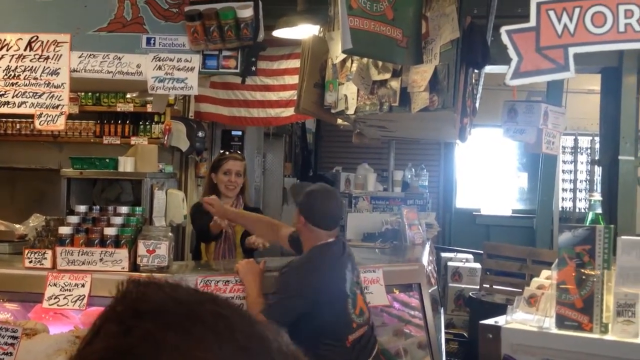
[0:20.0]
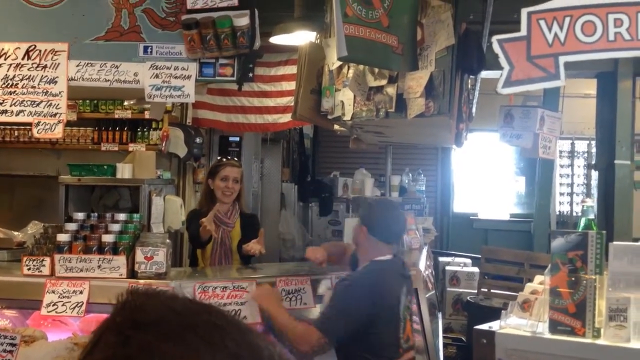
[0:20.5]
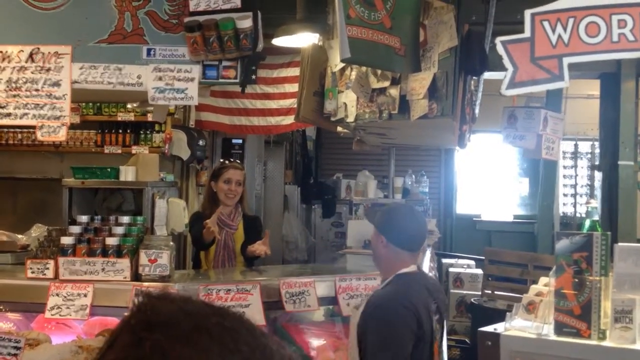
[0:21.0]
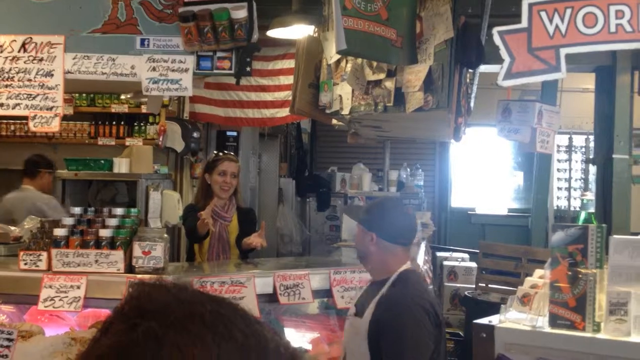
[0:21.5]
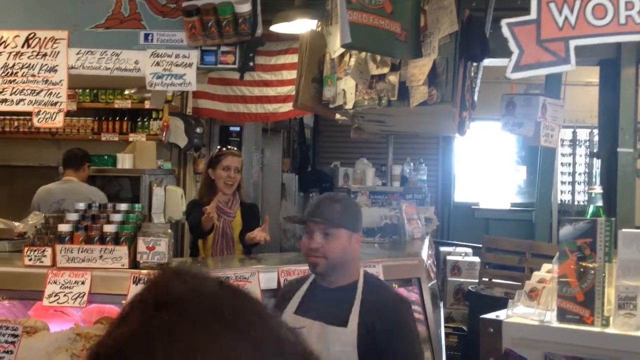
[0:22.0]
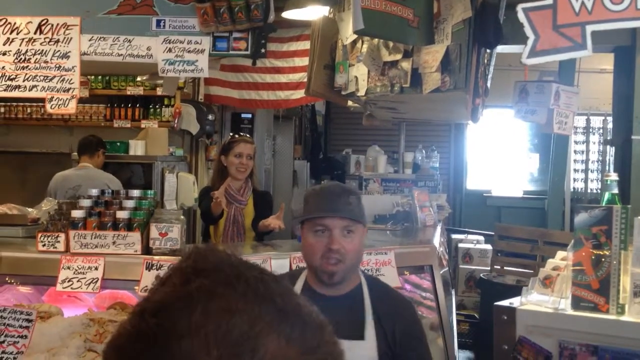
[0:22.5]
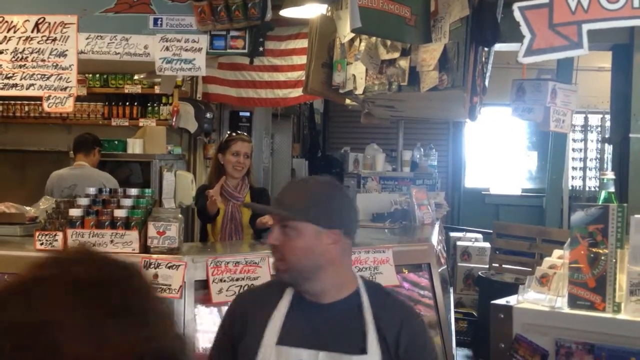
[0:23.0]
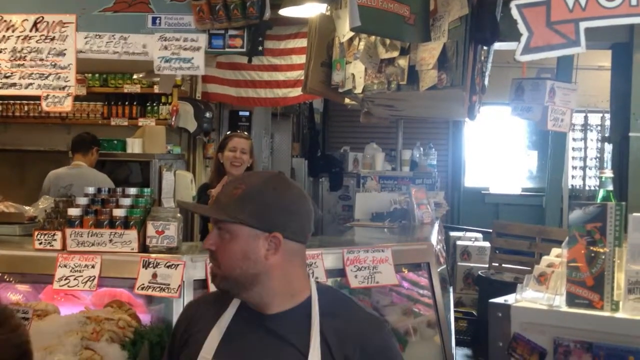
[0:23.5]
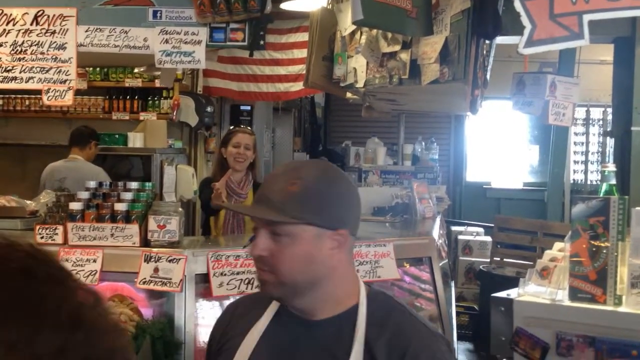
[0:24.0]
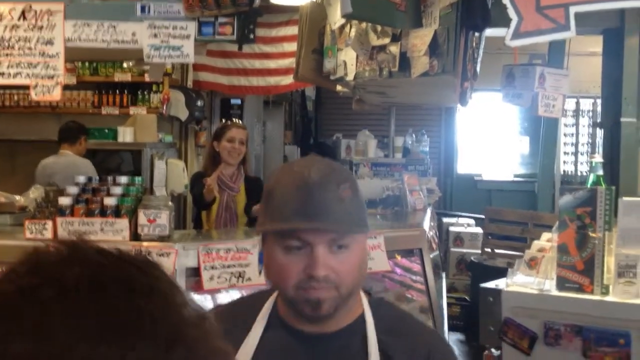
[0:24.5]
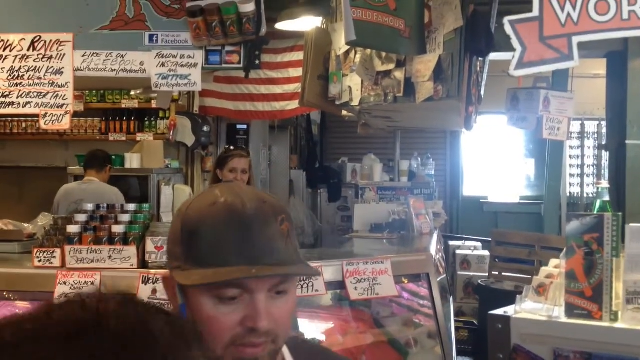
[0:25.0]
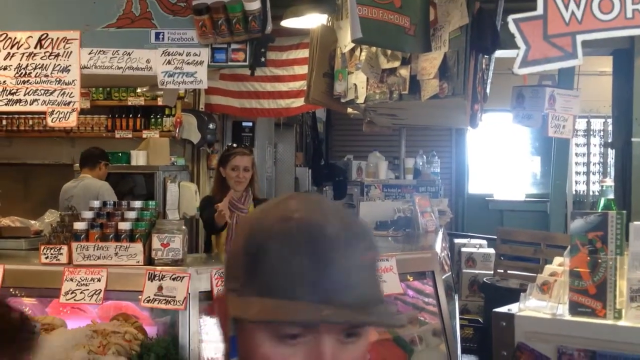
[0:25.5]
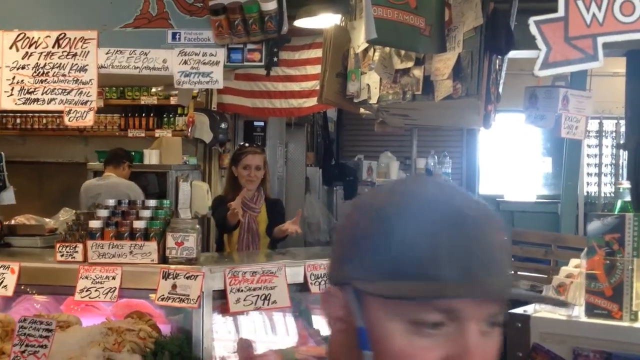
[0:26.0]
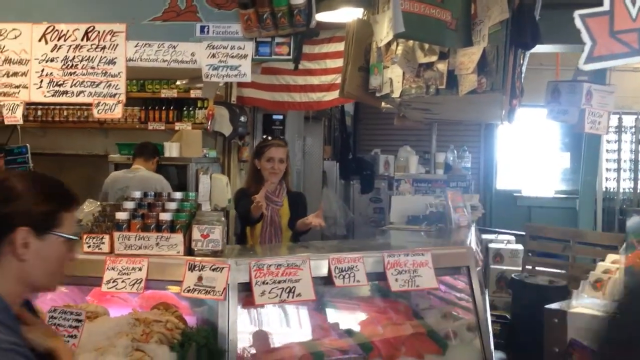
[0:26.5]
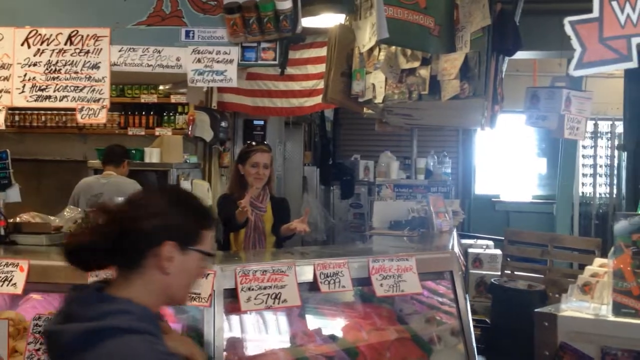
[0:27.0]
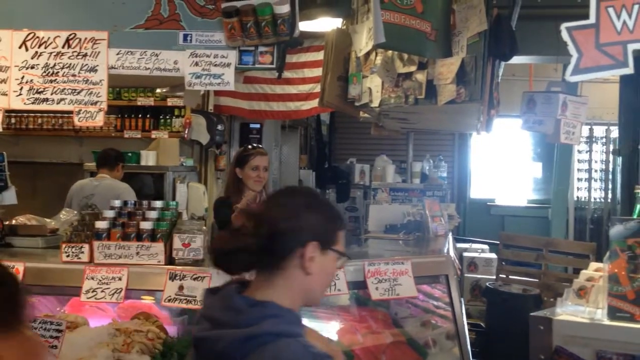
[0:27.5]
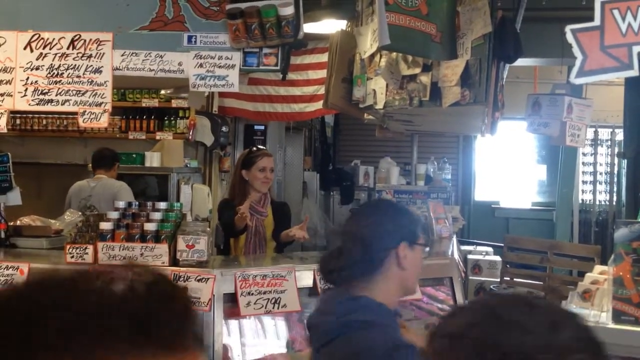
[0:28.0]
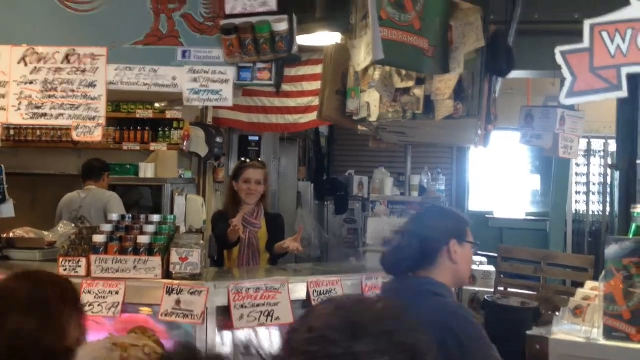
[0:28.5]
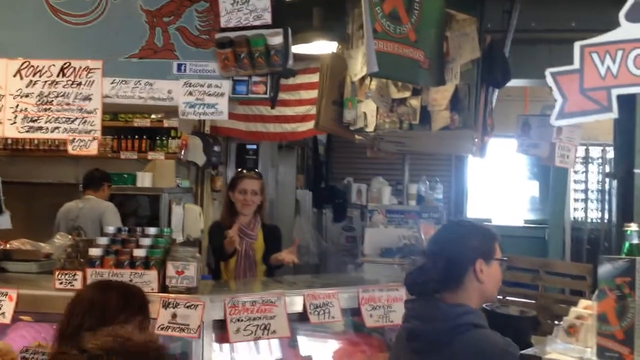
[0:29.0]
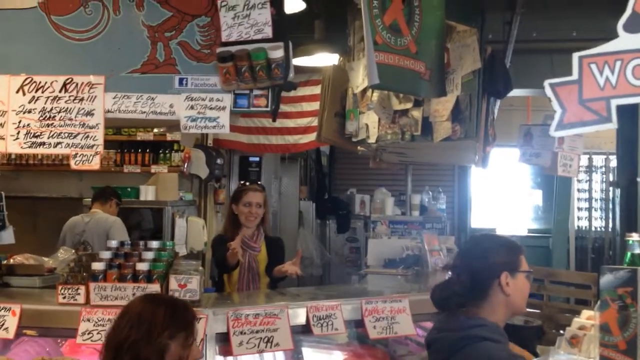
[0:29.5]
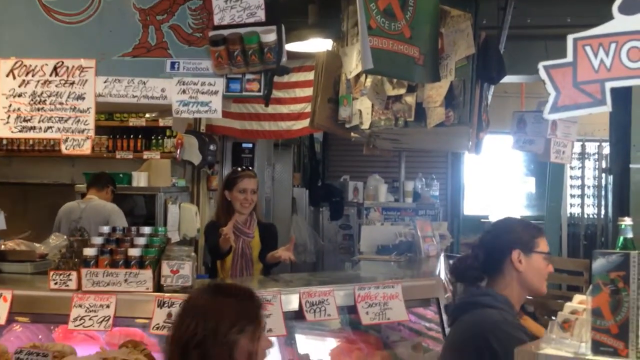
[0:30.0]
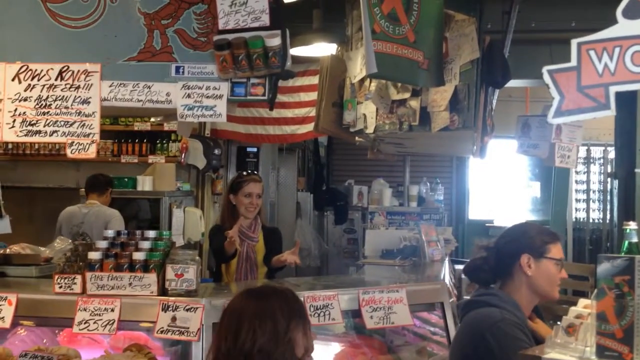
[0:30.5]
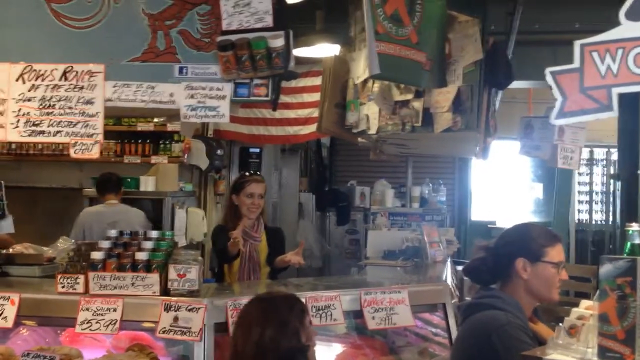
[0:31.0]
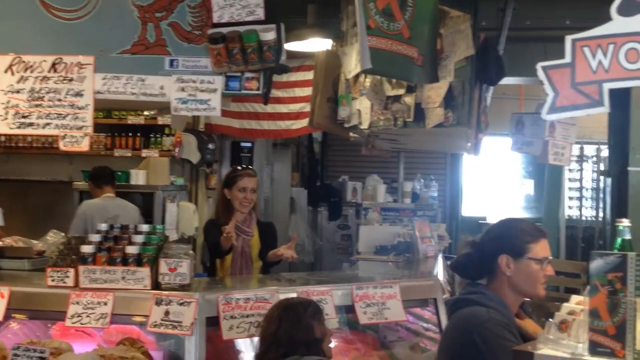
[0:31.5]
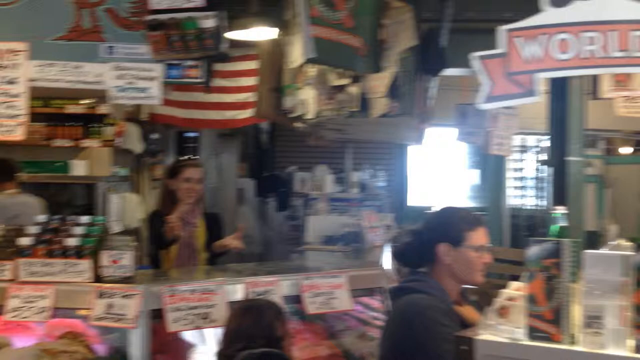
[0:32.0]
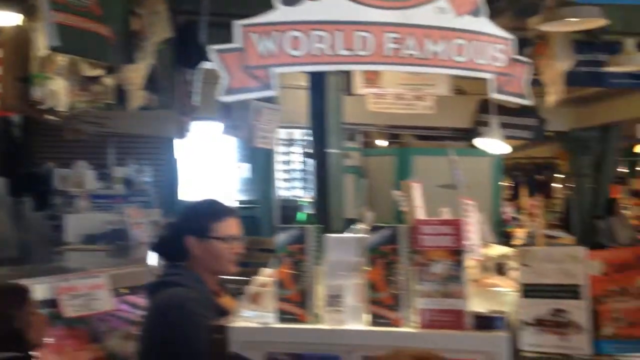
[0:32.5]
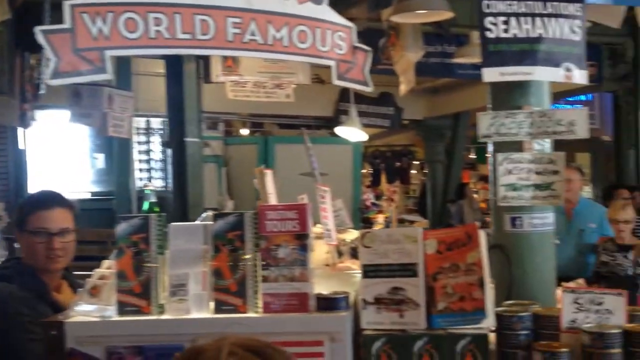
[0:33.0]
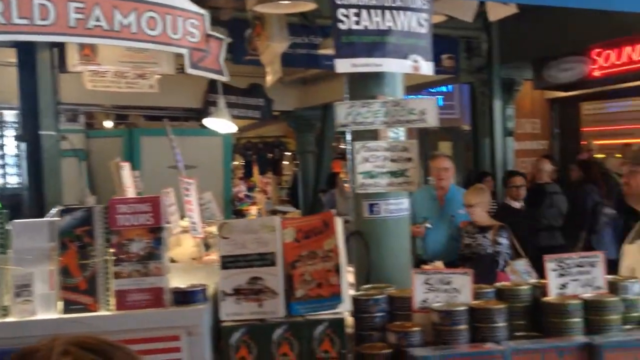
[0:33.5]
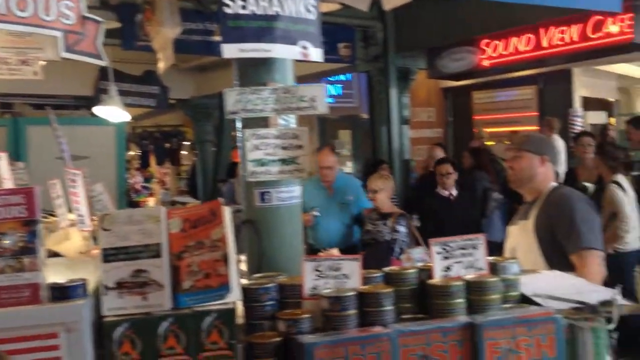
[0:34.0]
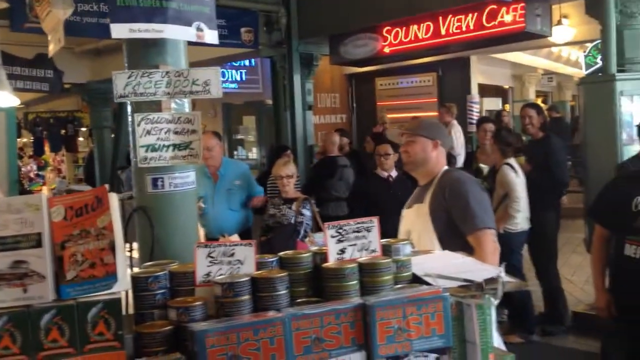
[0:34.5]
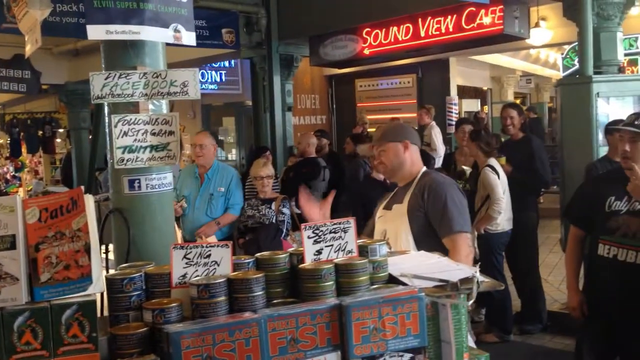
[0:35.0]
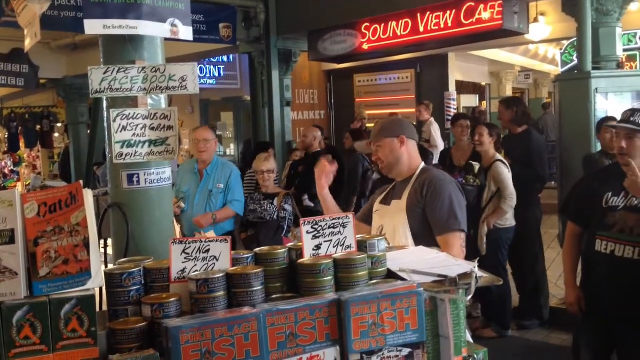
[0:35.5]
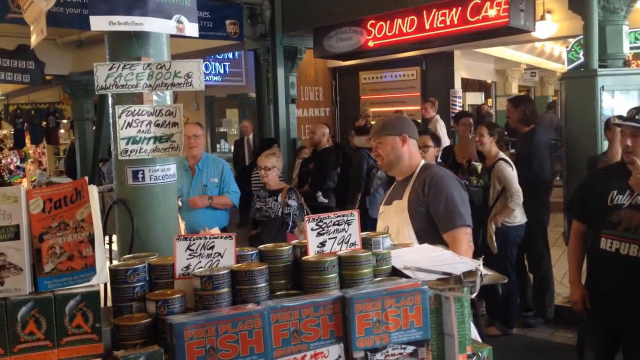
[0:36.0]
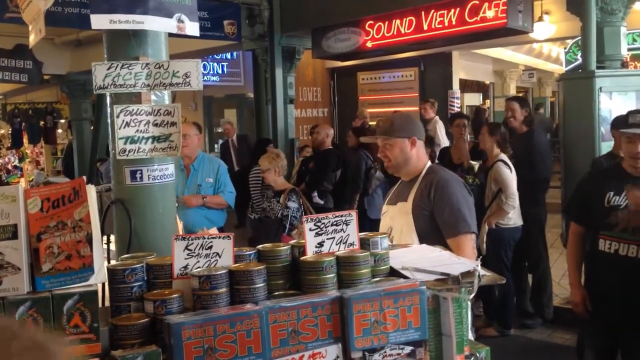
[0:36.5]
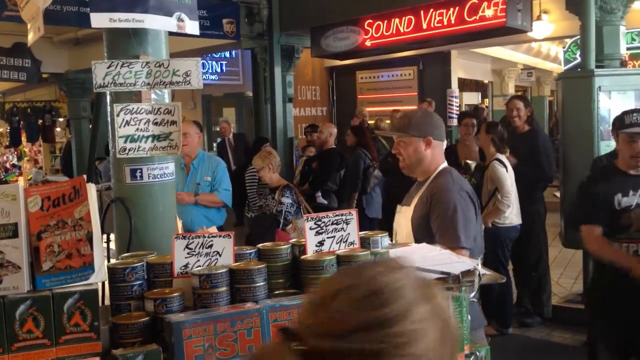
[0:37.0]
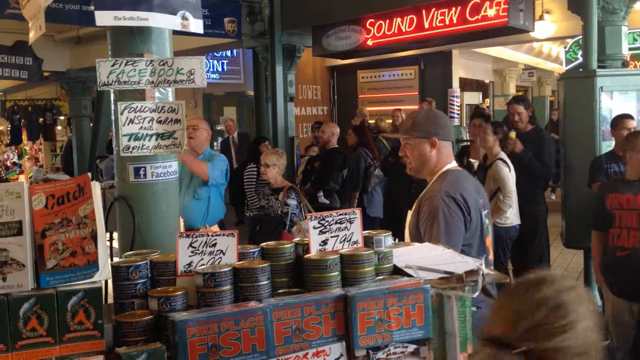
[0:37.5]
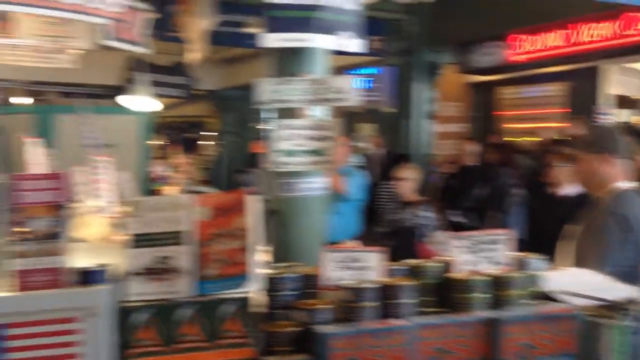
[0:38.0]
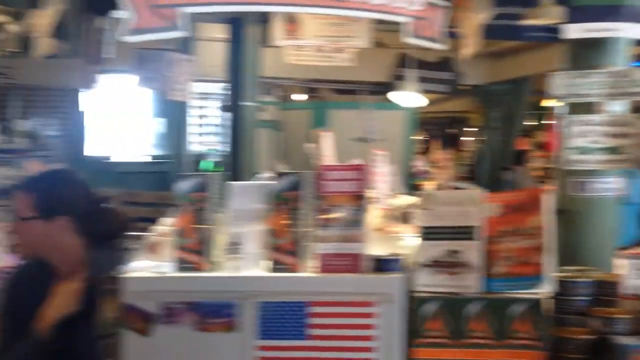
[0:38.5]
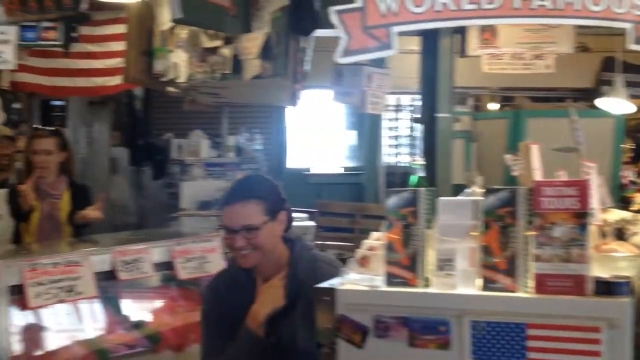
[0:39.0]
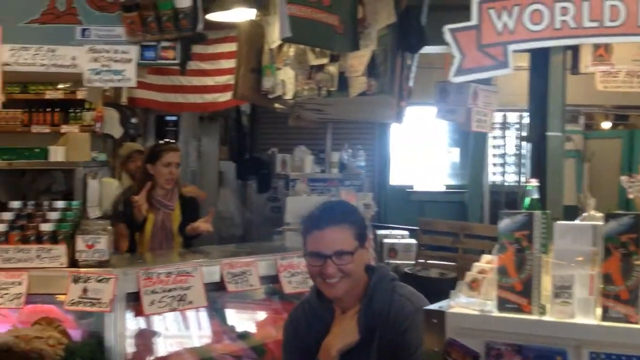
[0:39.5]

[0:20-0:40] The man keeps putting his hand to the cashier's arm. He wears a white apron, with a white band around his neck and the apron down at waist level; perhaps he is a cook at one of the other places. He moves his right forearm as if chopping something, and she catches his right forearm with her right hand. As he turns and walks away, she continues to hold her hands out, smiling, while other people walk back and forth. The camera pans to the right to a gift-shop-type area with cookbooks, canned salmon and other things. A neon light says "Soundview Cafe". From the other side of this little gift bar, the man turns back to look at her and appears to be flipping her off. Everyone is laughing.